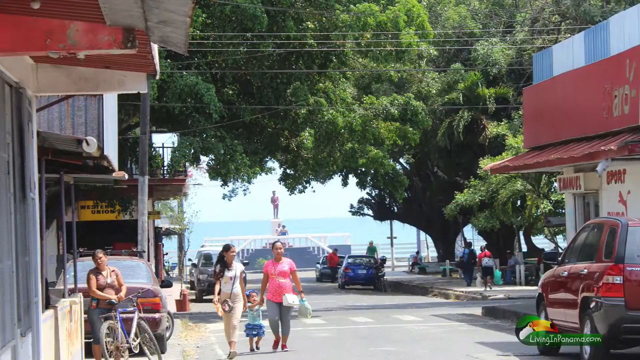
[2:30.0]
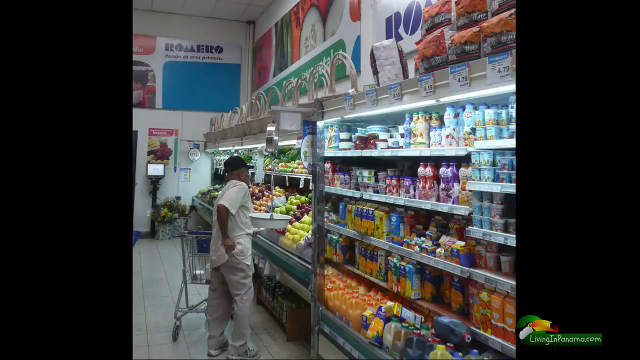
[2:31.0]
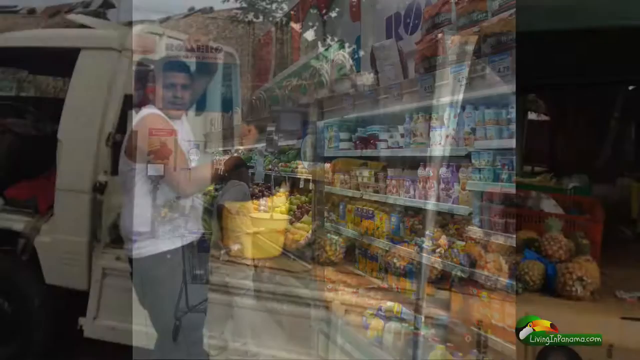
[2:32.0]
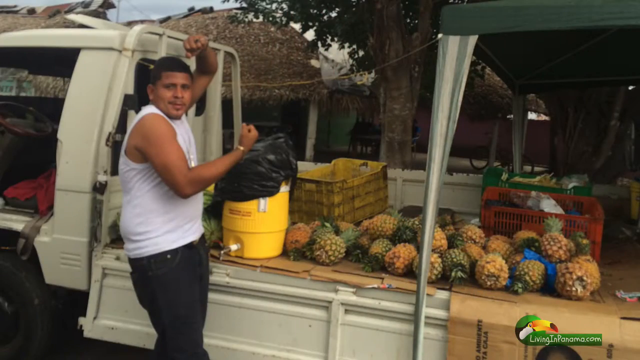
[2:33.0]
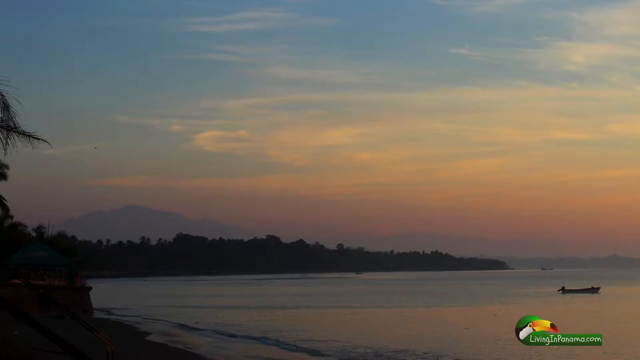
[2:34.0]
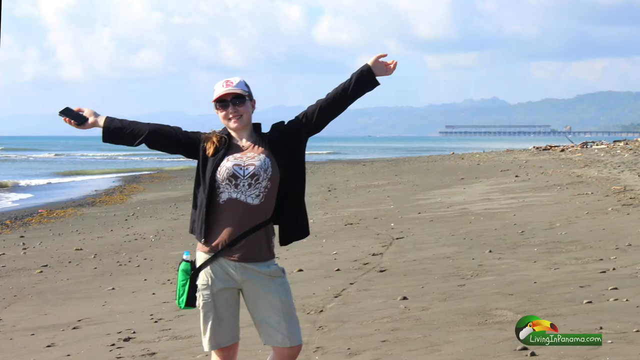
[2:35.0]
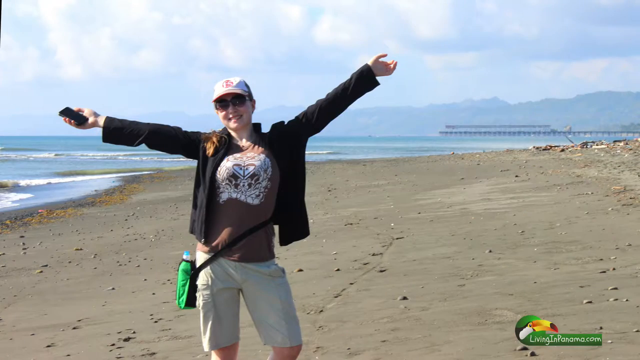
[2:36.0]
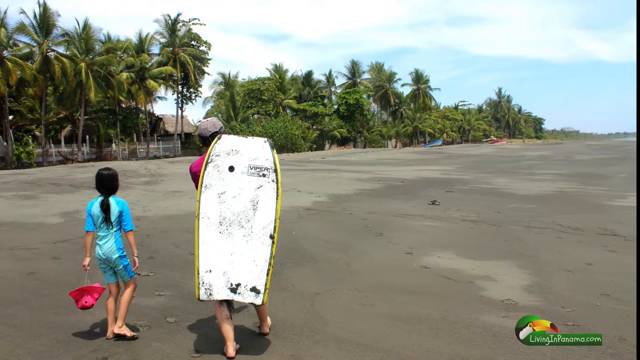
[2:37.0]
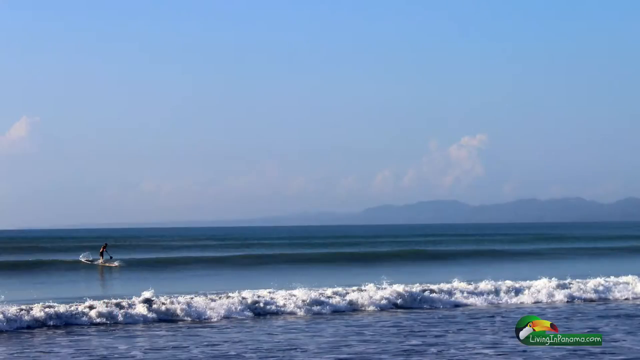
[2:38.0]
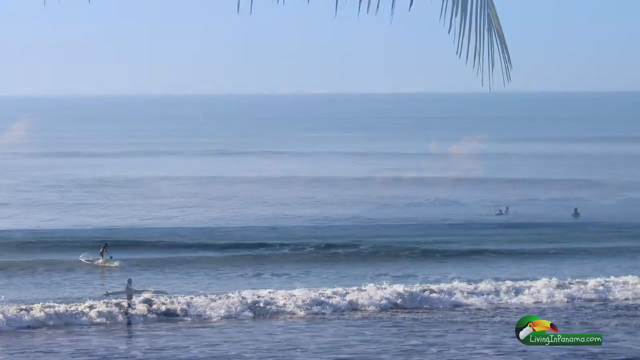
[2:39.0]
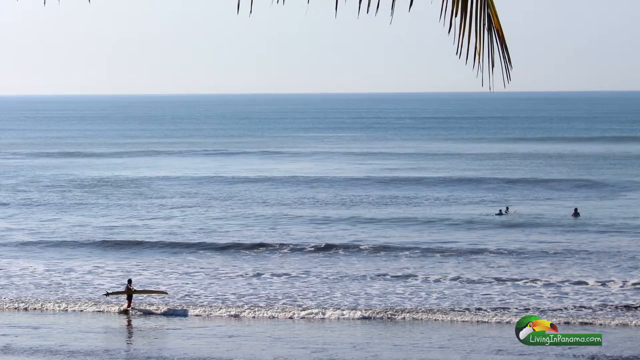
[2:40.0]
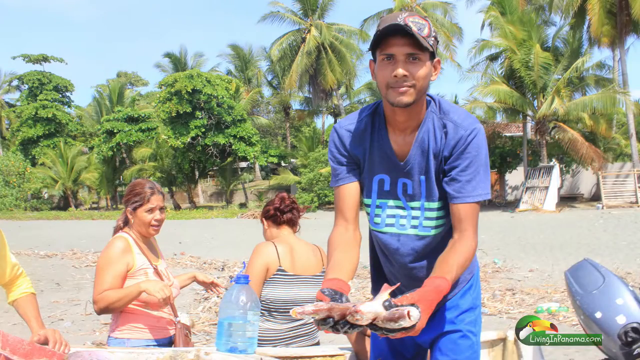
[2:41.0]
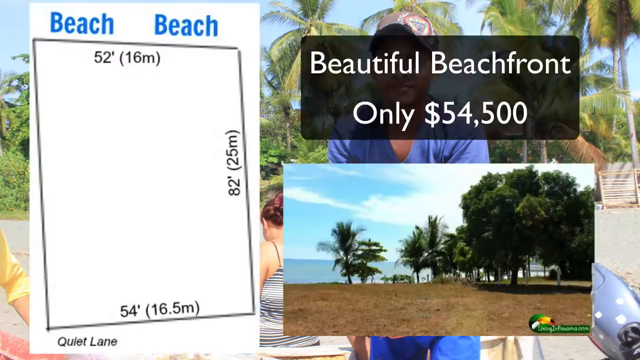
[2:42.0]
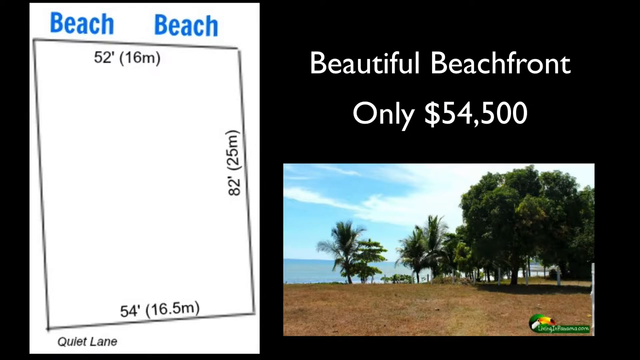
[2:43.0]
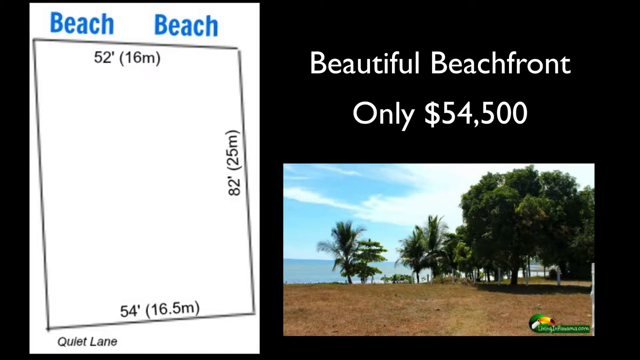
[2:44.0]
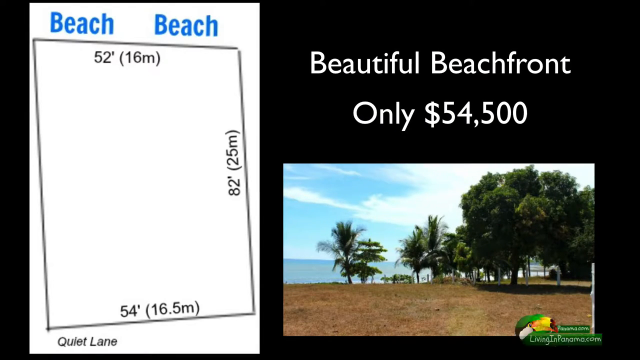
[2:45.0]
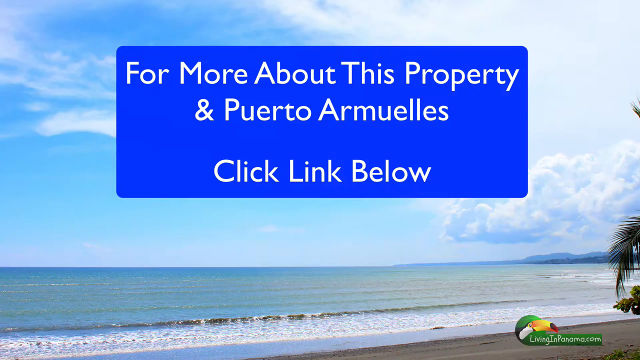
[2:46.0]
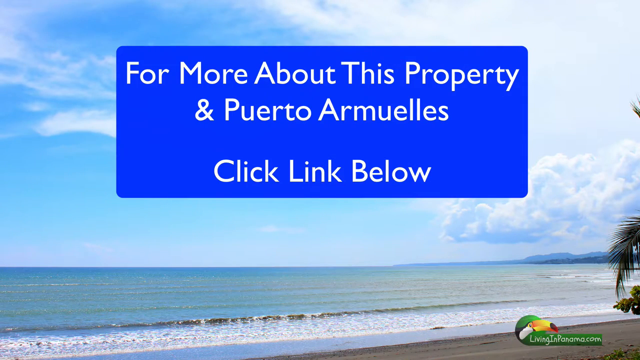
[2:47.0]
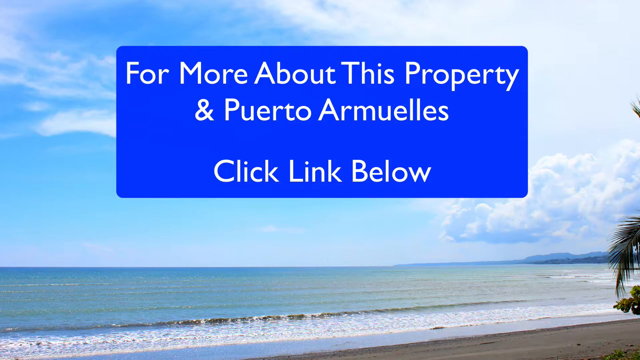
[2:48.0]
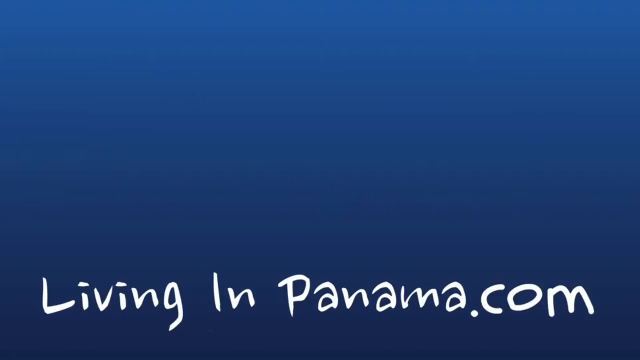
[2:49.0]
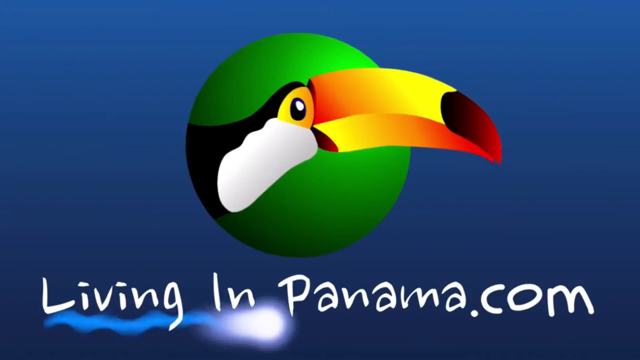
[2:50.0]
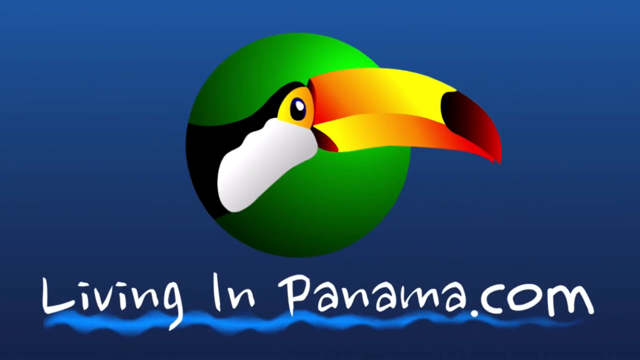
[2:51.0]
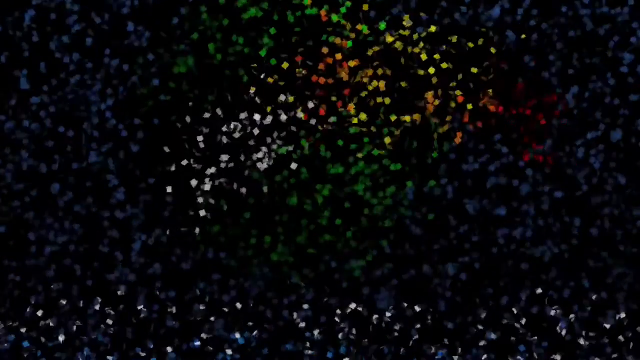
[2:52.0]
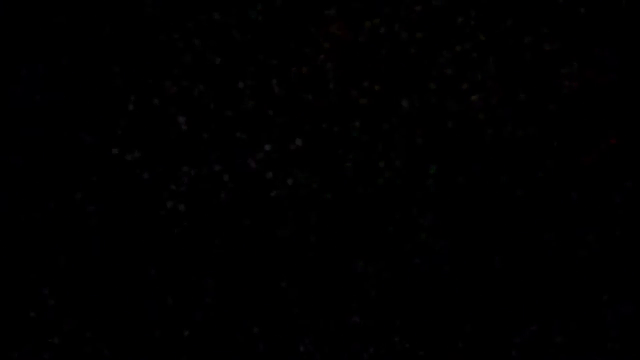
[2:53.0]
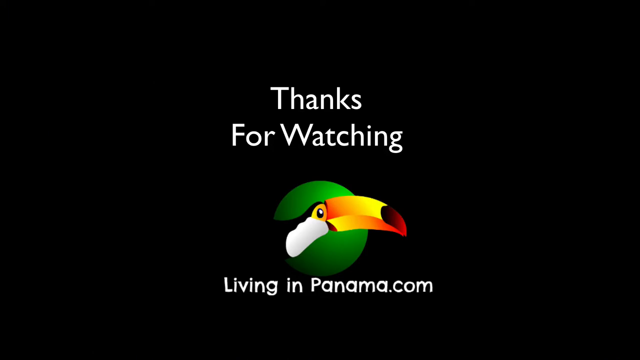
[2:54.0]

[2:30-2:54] A town centre appears, then the inside of a grocery store with some fruit and vegetables, a man shopping with a trolley who wears a black baseball cap, and a fridge with yoghurts and drinks at the front of the screen. A man stands outside his truck, which looks to have a drinks machine on the left-hand side of the rear and lots of large pieces of fruit. A dusky sunset photo of the beach with mountains in the background follows, then a picture of a lady on a beach with her arms outstretched, wearing a white and red baseball cap and a black jumper, with a bag at her side holding a water bottle, and holding a mobile phone. Next, two people walk down the beach: an adult with a paddleboard on his back and a young girl in a swimsuit carrying a hat. Images of people surfing in the sea follow, then an image of the beach with a footprint of a plot of land that says "beautiful beach front only $54,500". Finally, an image of the beach shows a square with text beginning "for more information about this" and ending "click the link below".